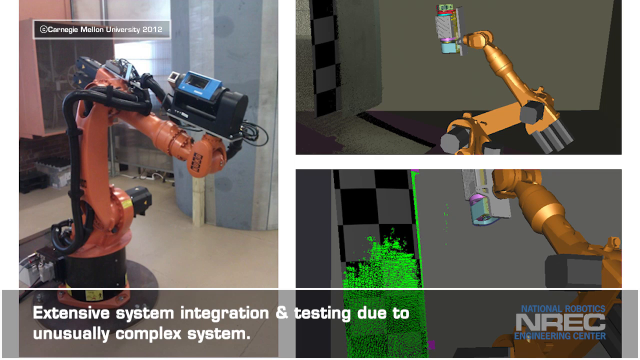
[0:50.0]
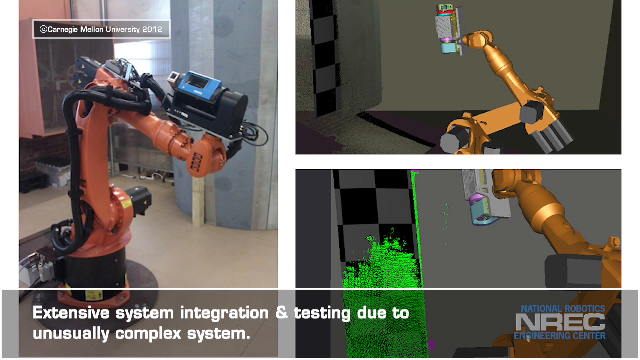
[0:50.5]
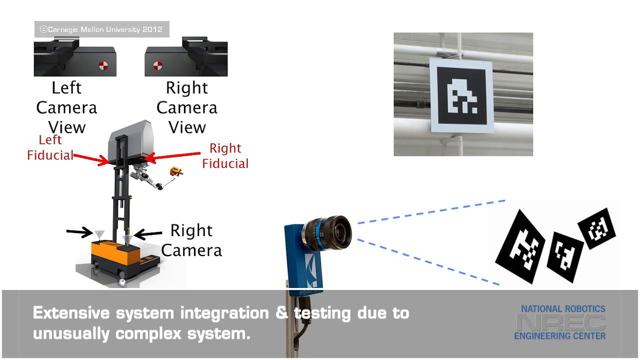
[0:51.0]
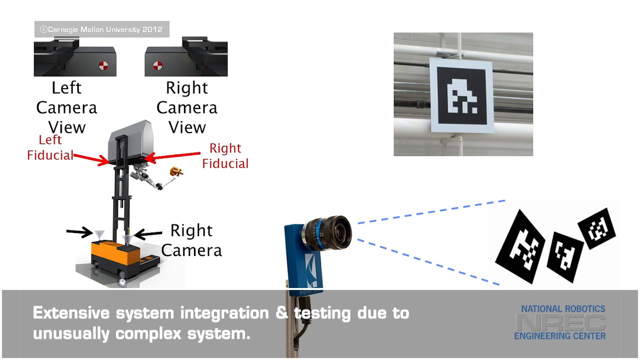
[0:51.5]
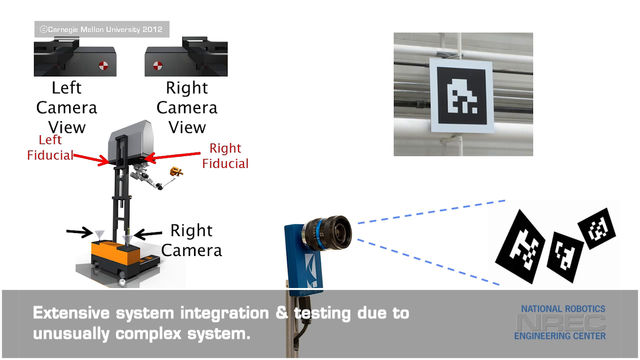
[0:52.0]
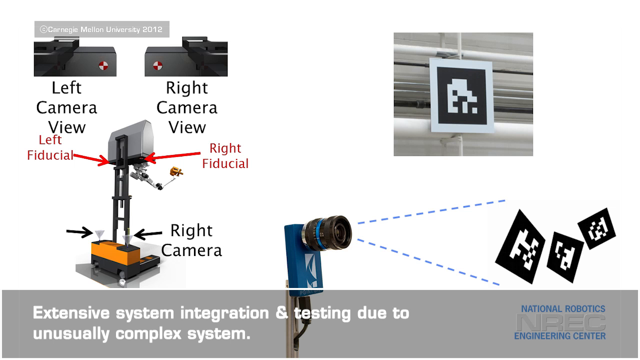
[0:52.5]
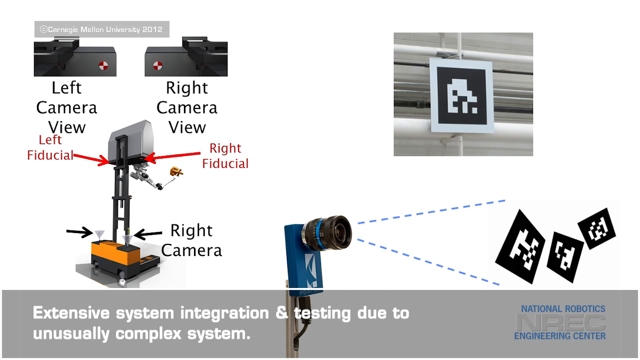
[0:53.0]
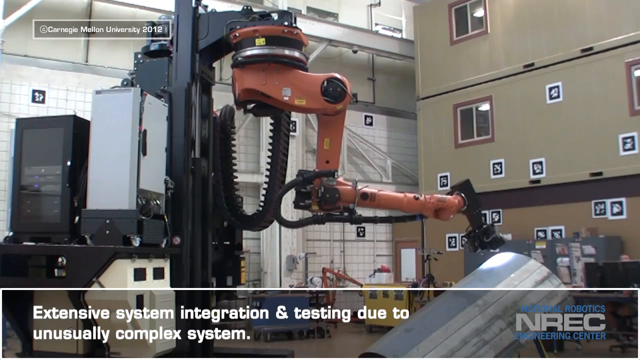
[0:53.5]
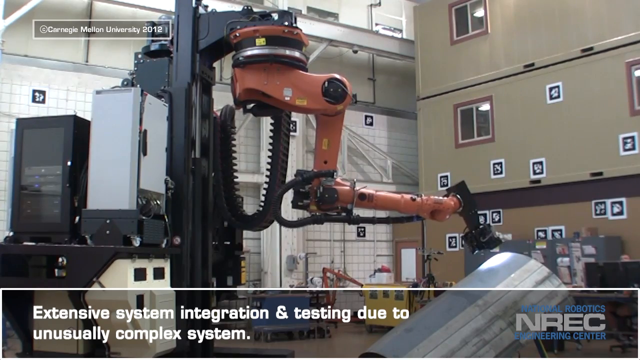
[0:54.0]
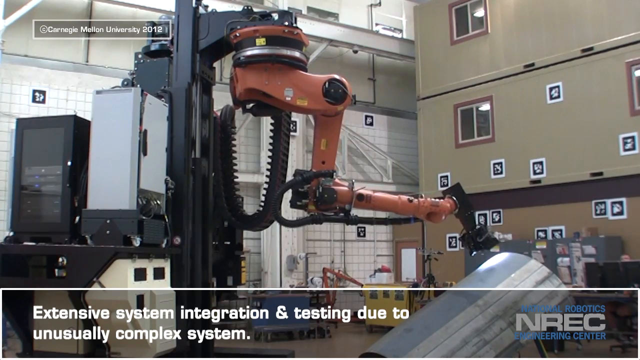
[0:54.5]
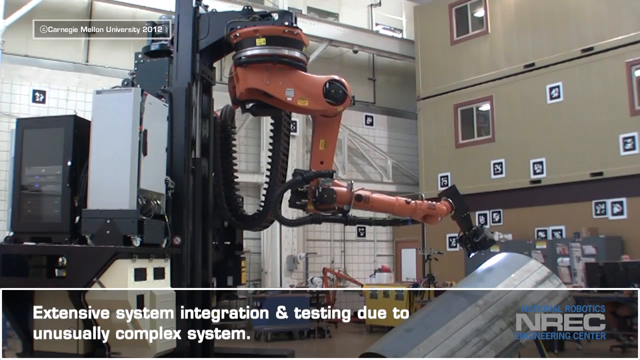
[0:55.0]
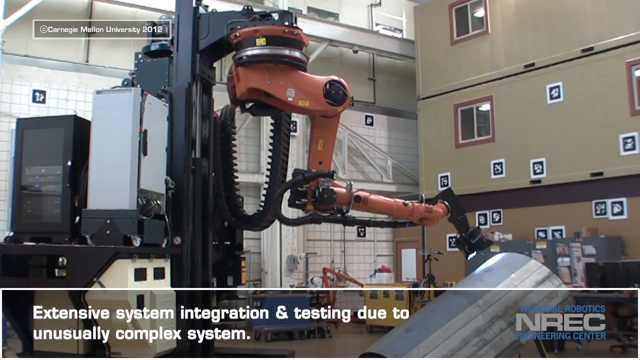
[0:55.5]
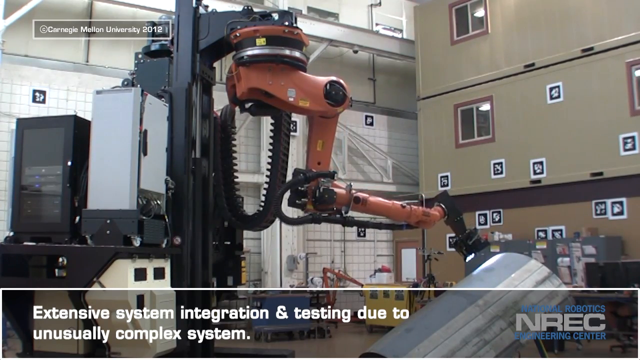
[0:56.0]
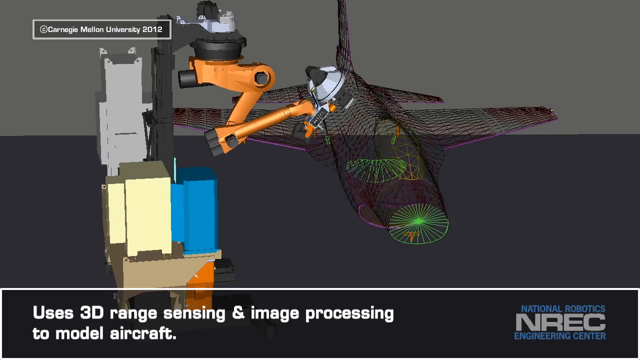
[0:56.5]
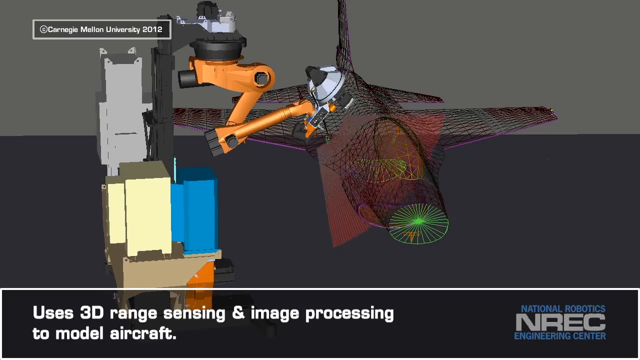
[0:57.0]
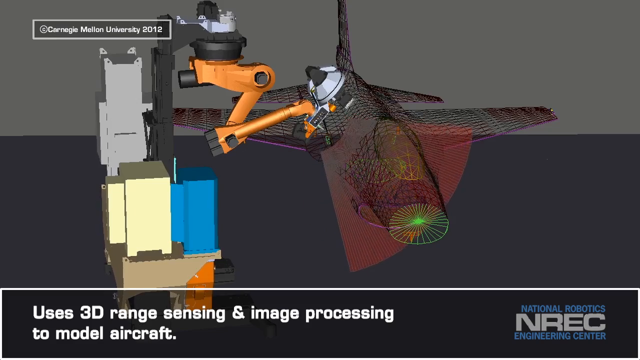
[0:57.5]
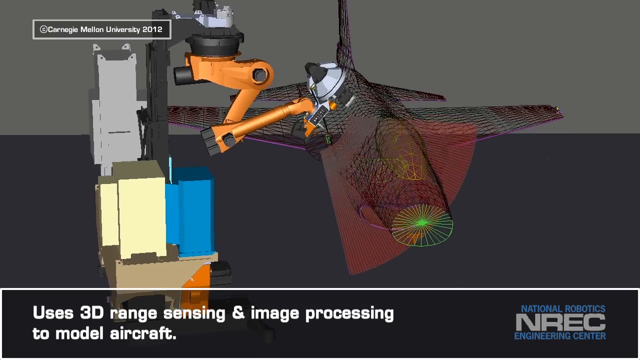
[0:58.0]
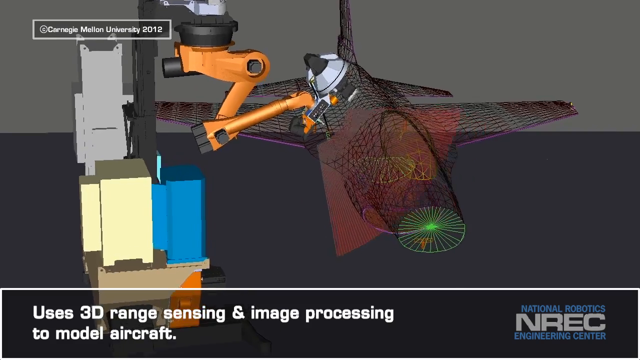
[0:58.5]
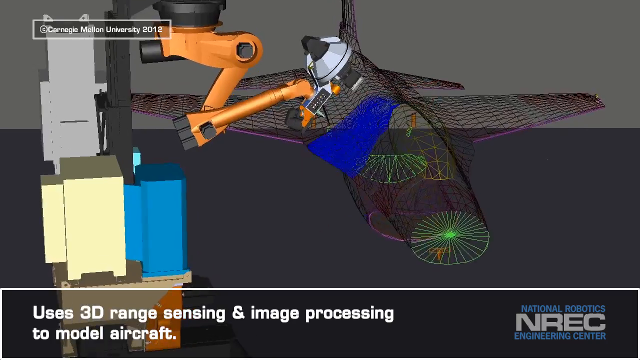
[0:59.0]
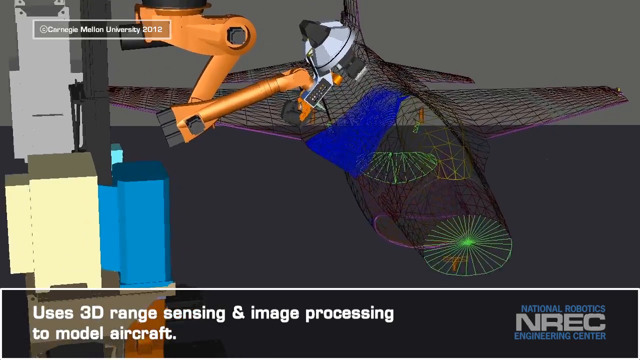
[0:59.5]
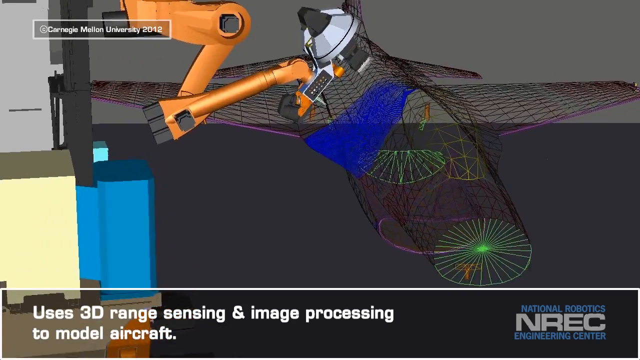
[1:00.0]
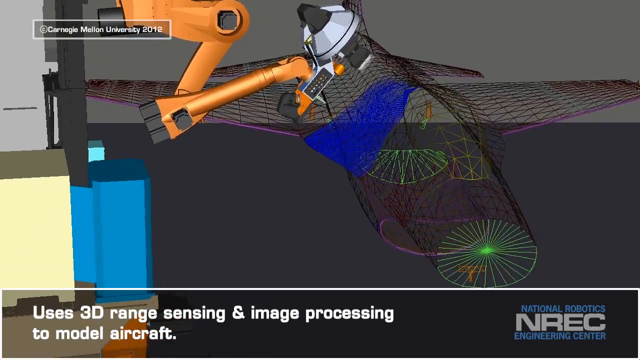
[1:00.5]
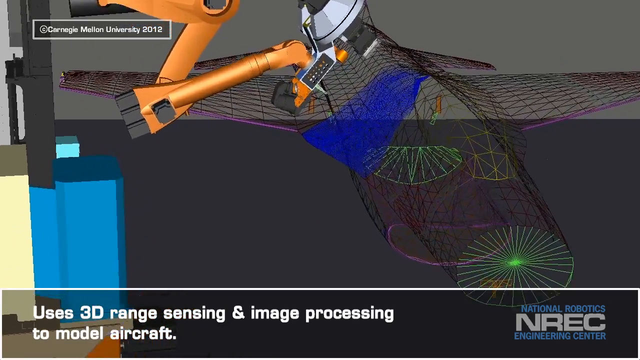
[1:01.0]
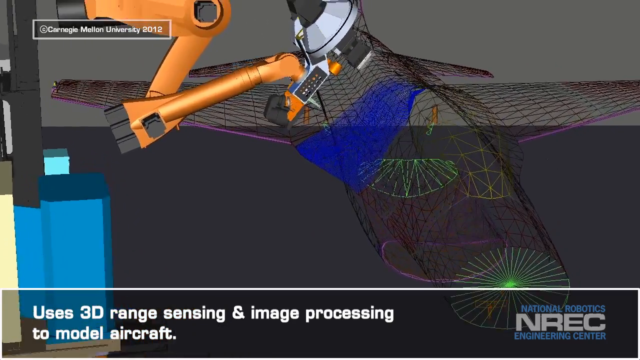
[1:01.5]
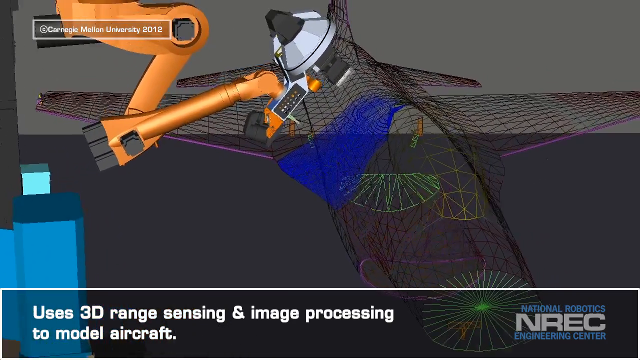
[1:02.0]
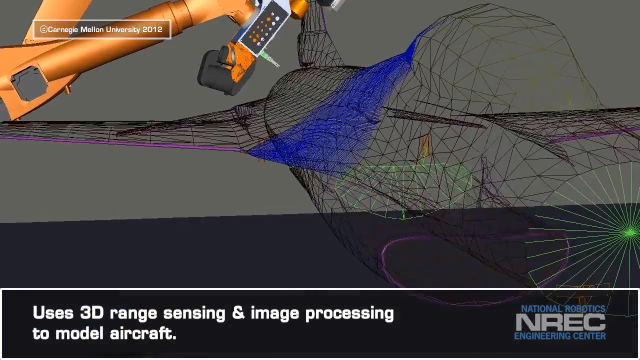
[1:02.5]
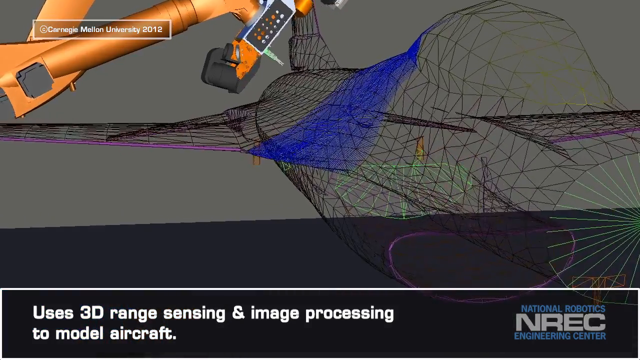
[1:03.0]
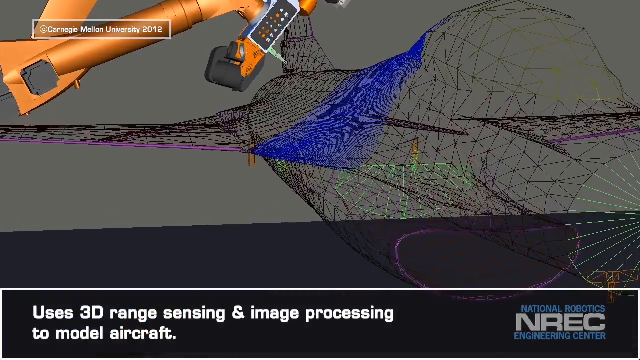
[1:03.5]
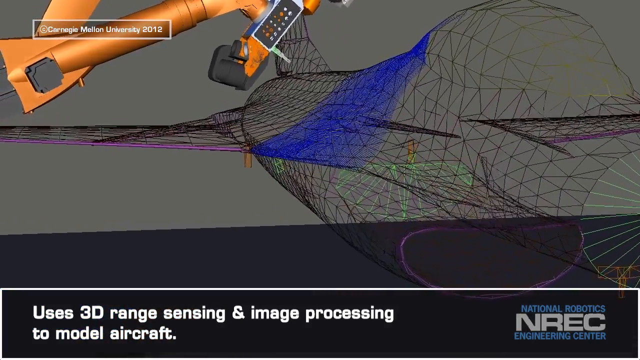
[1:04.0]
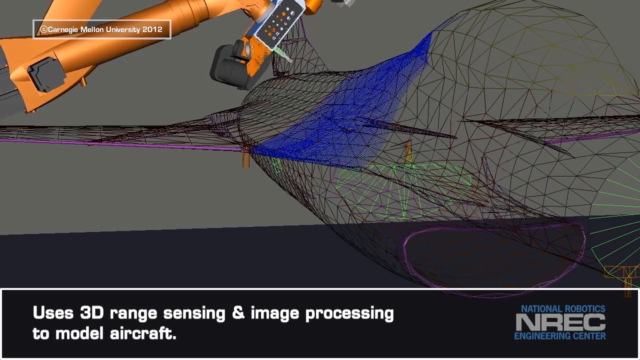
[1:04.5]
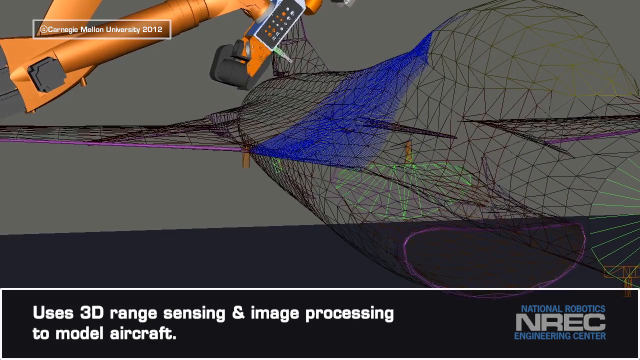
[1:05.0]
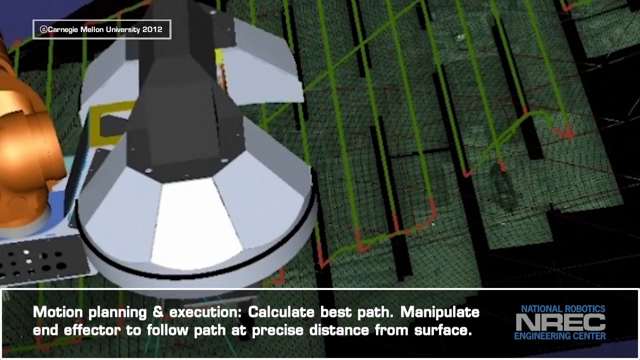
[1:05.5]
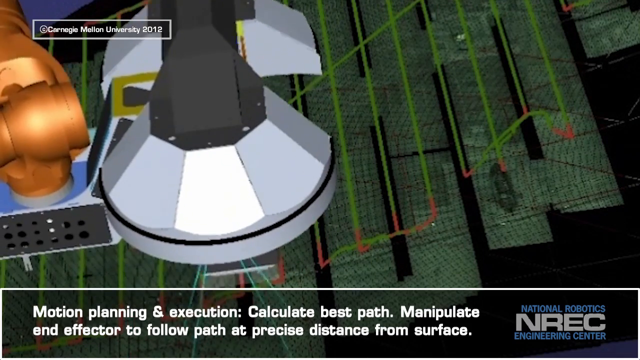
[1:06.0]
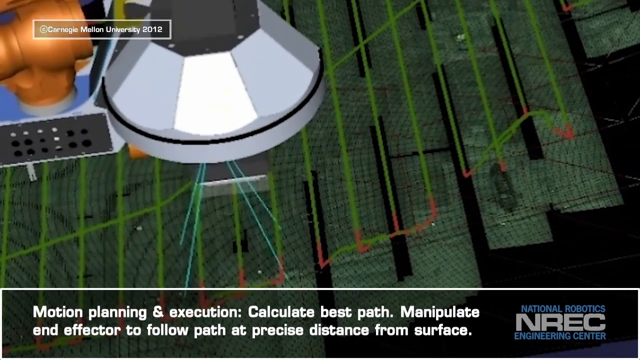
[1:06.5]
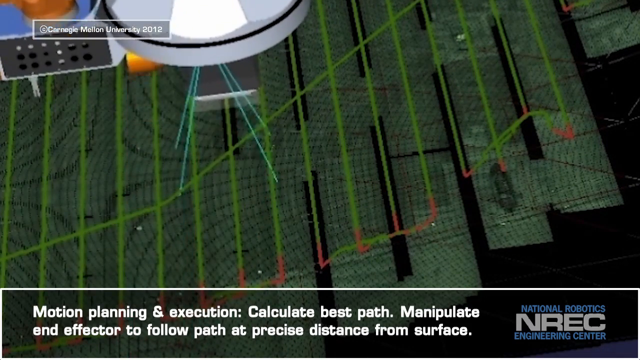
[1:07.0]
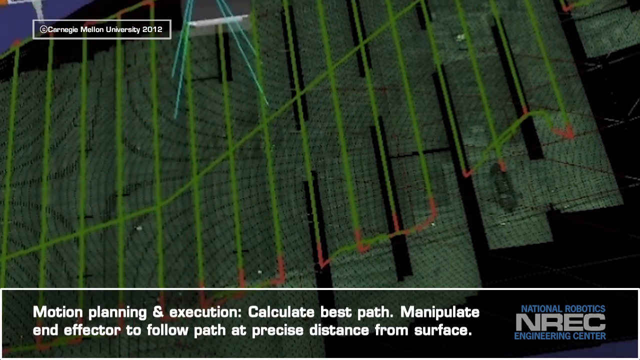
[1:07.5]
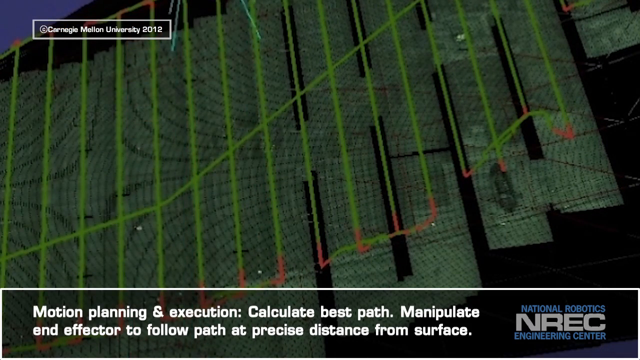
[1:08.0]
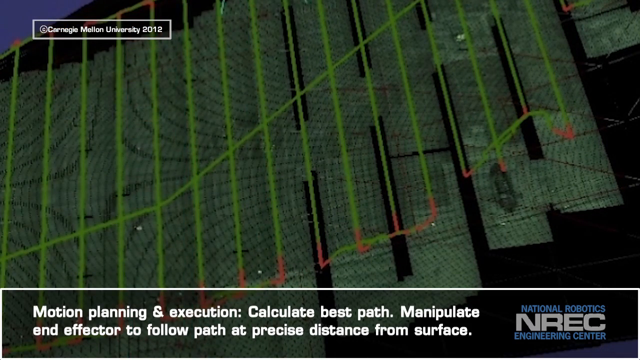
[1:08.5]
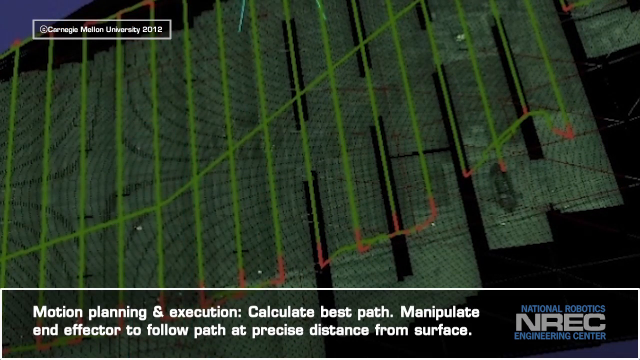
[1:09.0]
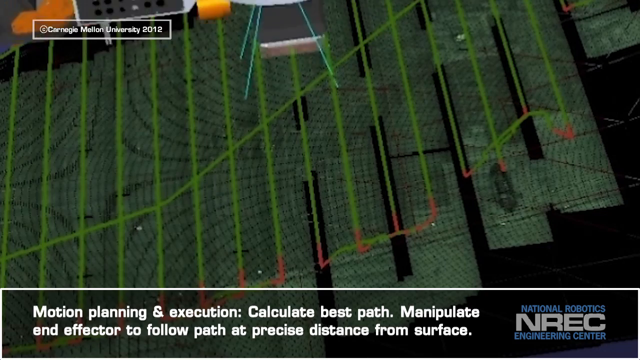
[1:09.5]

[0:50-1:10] A split screen shows three images: one on the left and two on the right. On the left is a large orange and black robotic arm that appears to have equipment attached all over it to perform the needed work. The two images on the right appear to be an animated simulation of the robotic arm, with the orange arm and black instrument visible in both. At the bottom of the screen, white text on a light gray background reads "Extensive system integration and testing due to unusually complex system." The view then changes to another screen referring to the left camera view and the right camera view. A visualization of the machine at the bottom has arrows pointing to the right camera and red arrows pointing directly underneath, with an image showing two other things on the right side of the screen.